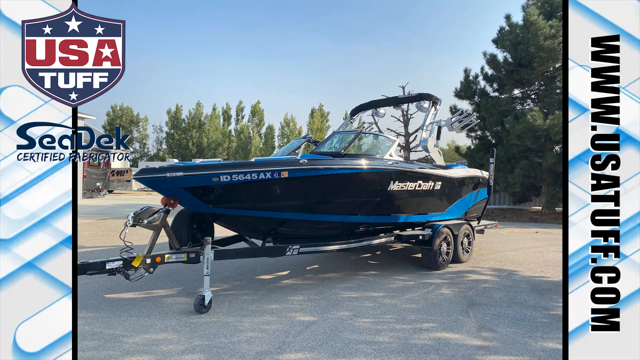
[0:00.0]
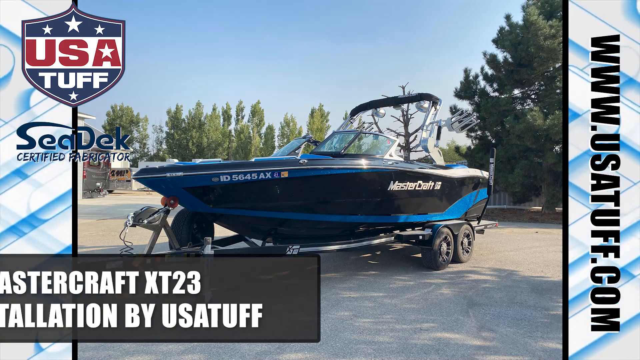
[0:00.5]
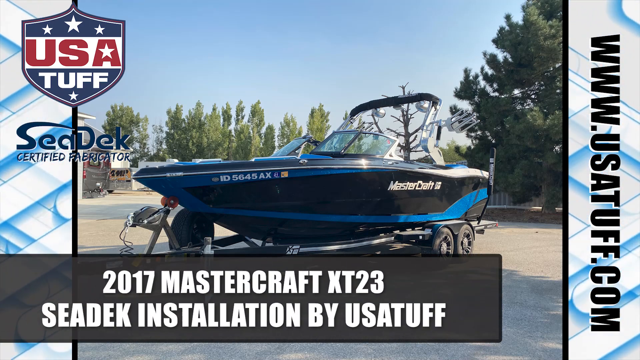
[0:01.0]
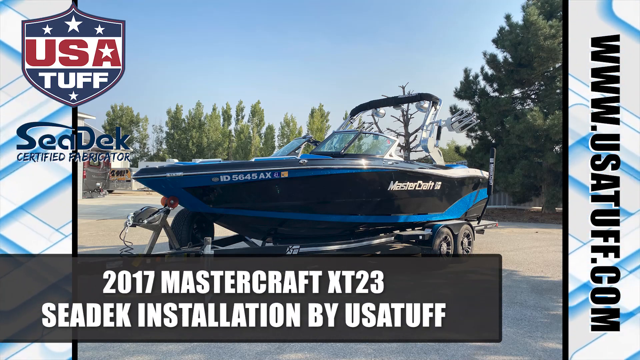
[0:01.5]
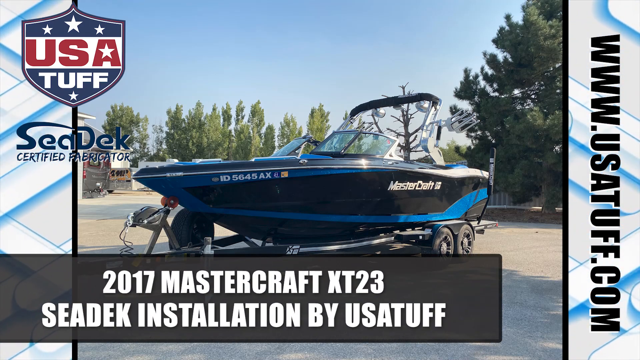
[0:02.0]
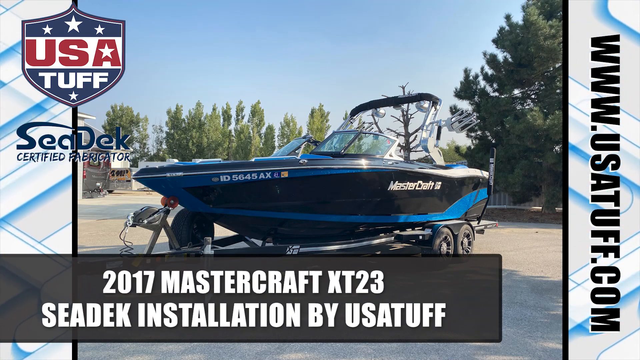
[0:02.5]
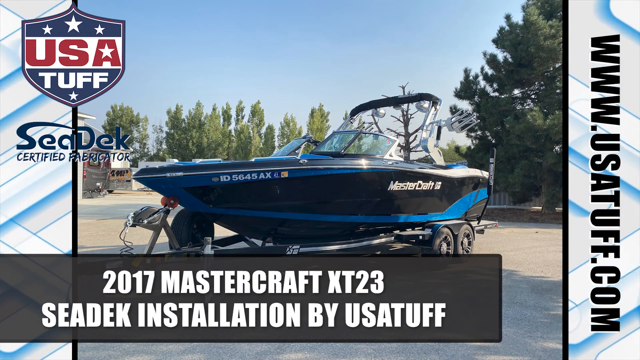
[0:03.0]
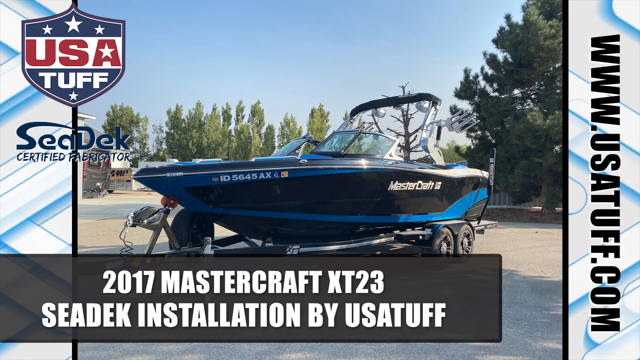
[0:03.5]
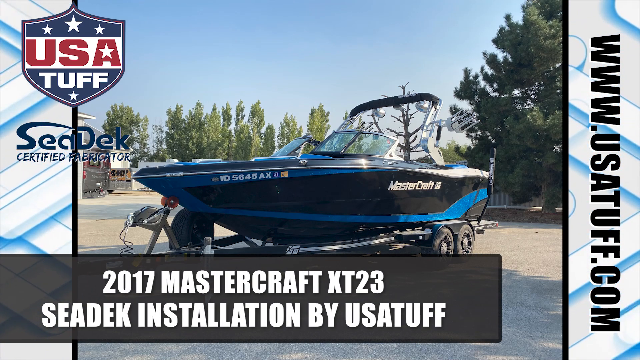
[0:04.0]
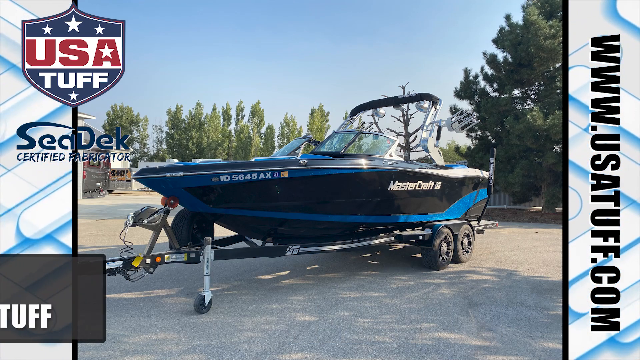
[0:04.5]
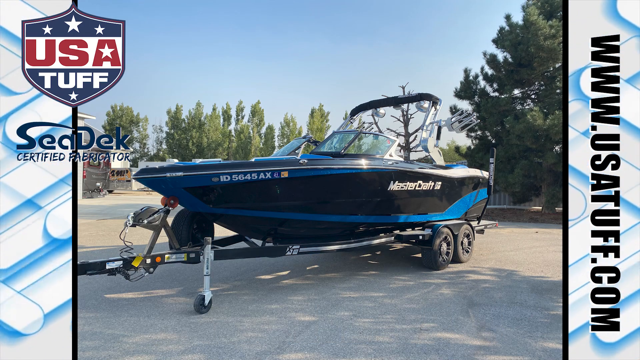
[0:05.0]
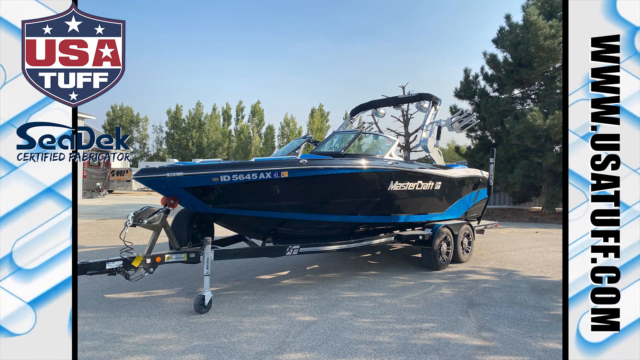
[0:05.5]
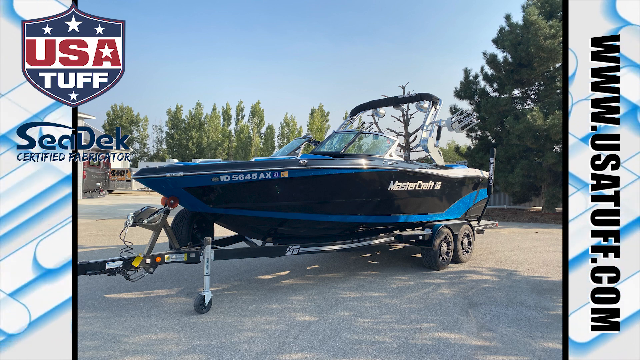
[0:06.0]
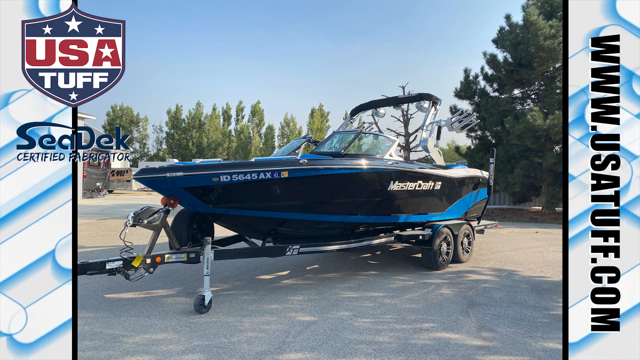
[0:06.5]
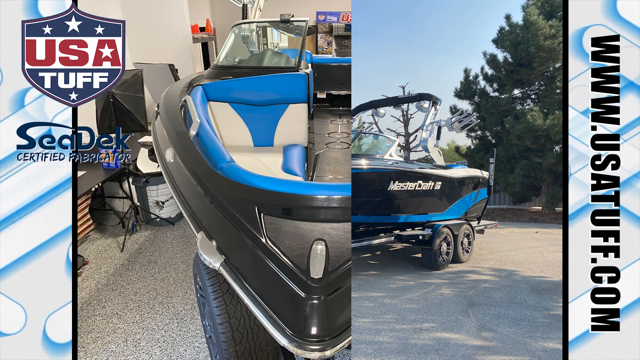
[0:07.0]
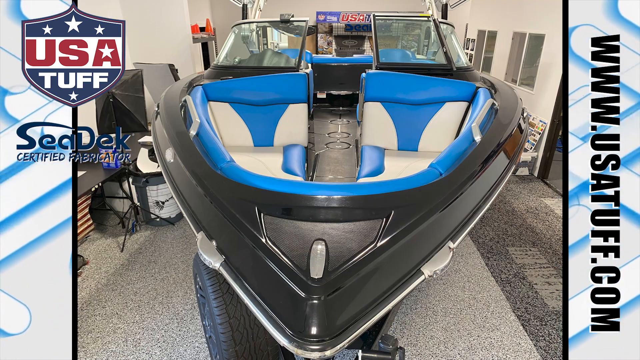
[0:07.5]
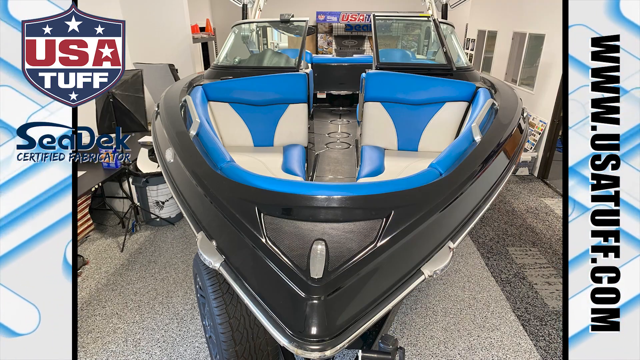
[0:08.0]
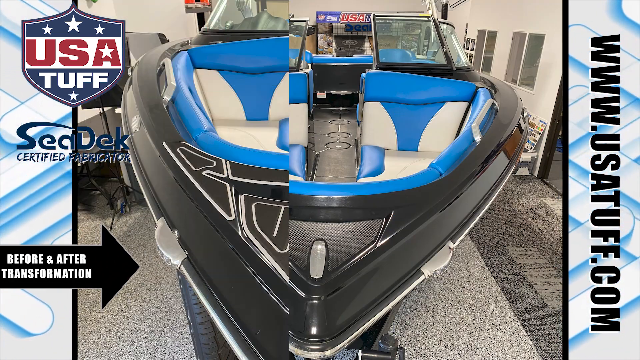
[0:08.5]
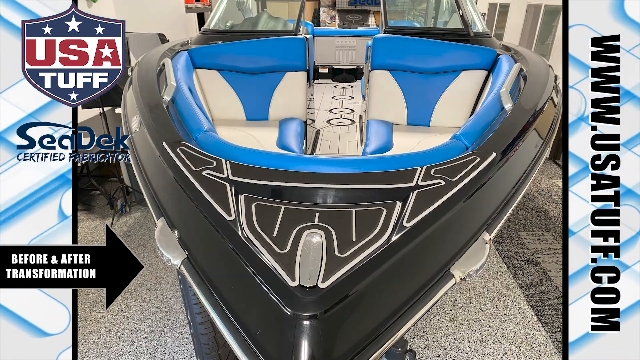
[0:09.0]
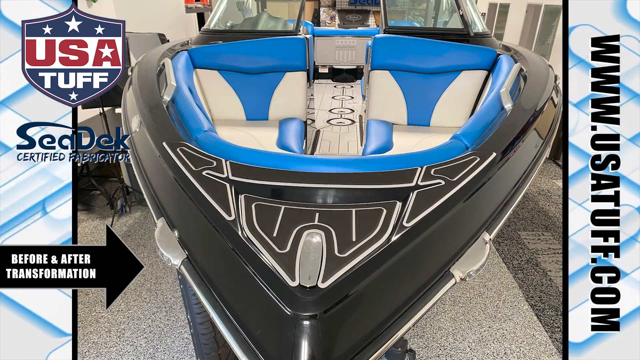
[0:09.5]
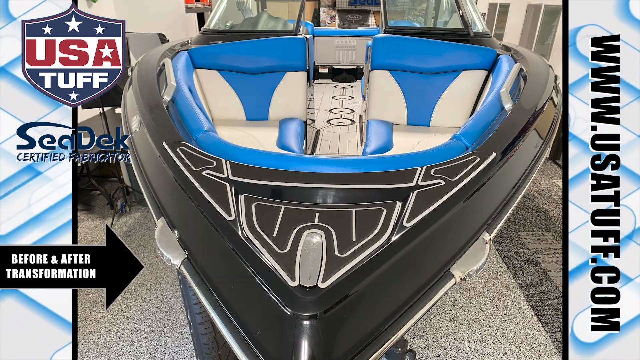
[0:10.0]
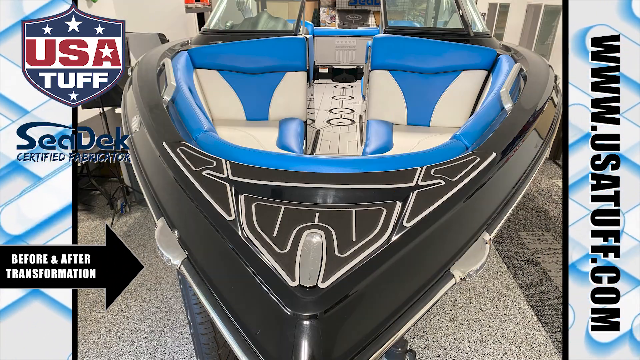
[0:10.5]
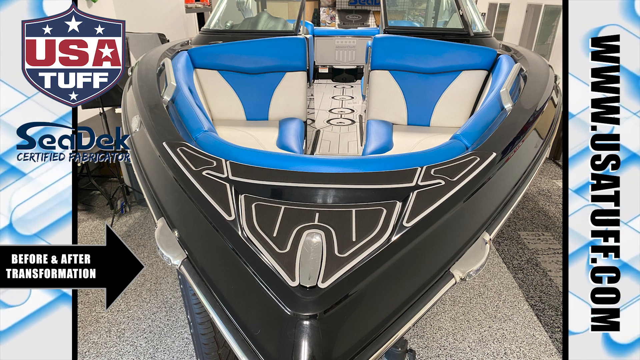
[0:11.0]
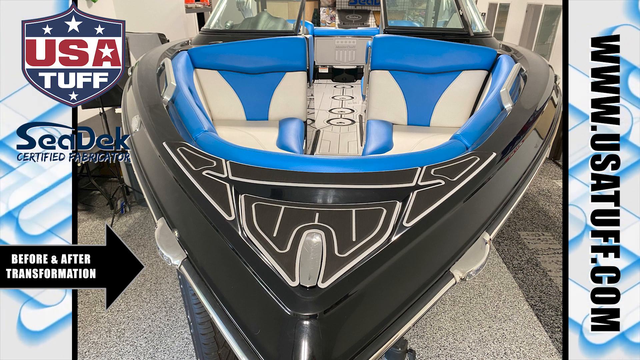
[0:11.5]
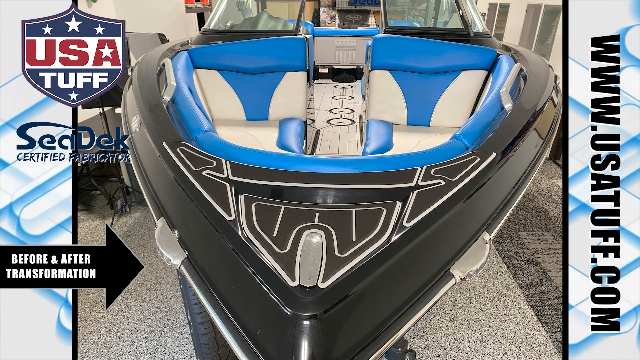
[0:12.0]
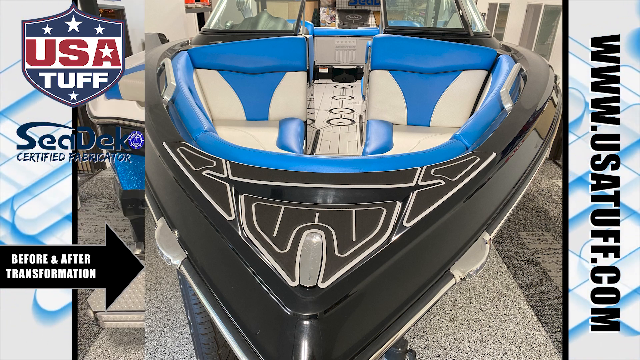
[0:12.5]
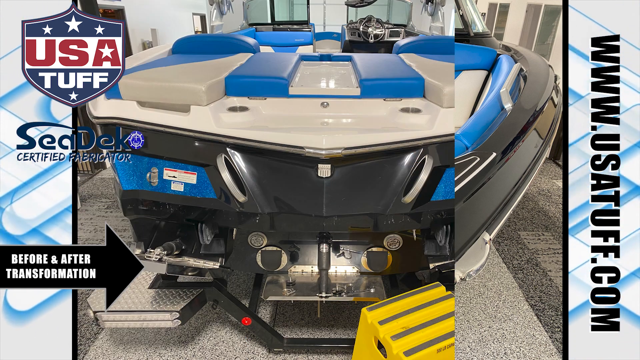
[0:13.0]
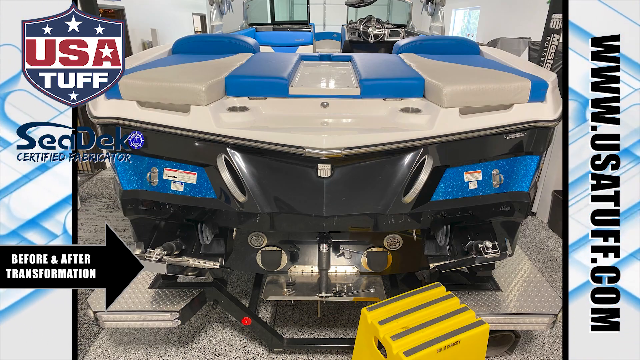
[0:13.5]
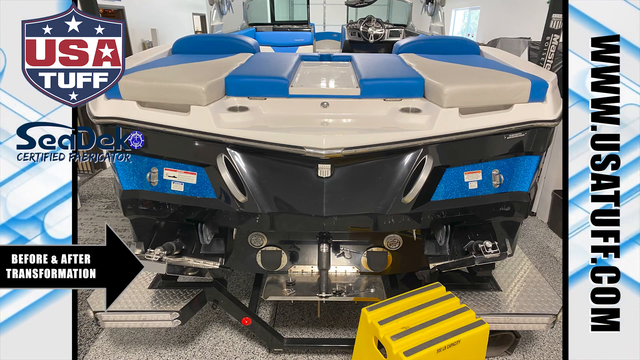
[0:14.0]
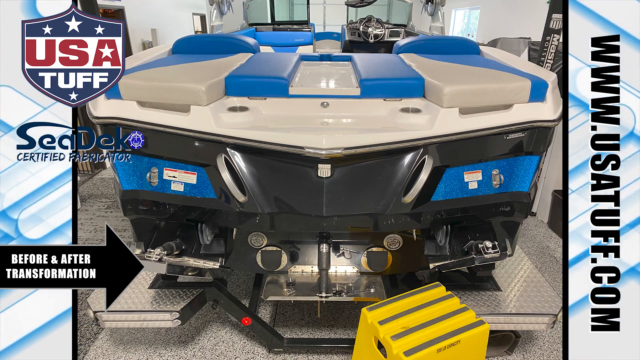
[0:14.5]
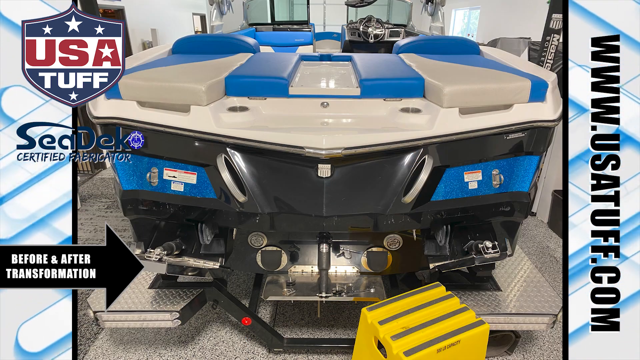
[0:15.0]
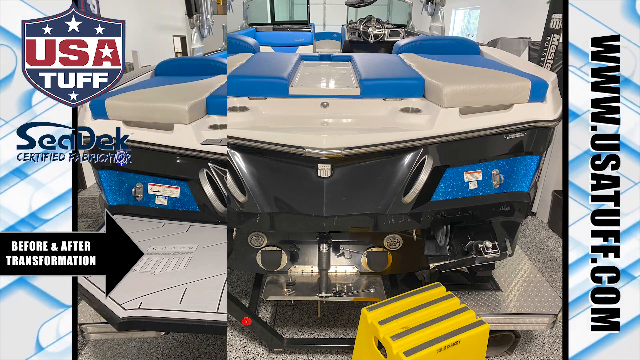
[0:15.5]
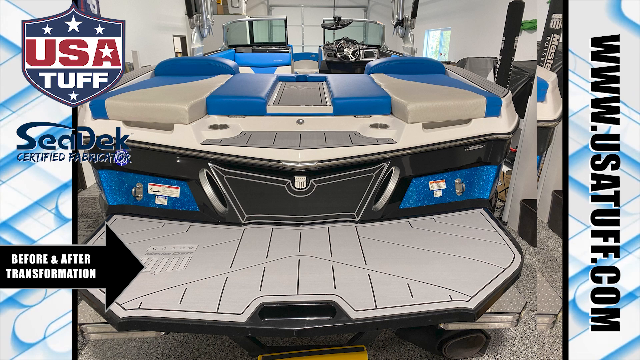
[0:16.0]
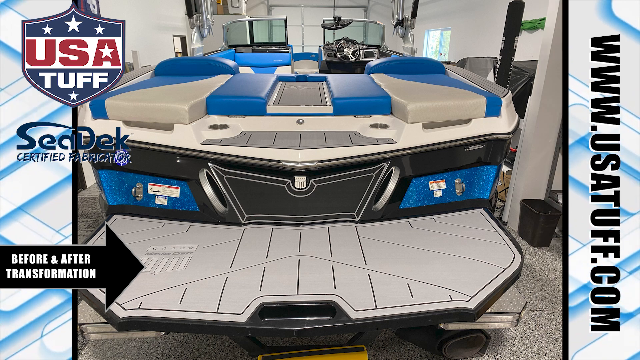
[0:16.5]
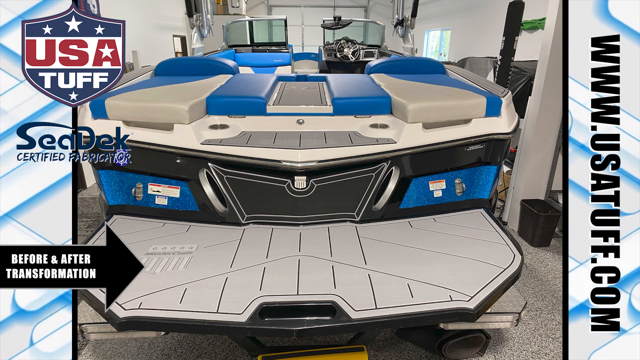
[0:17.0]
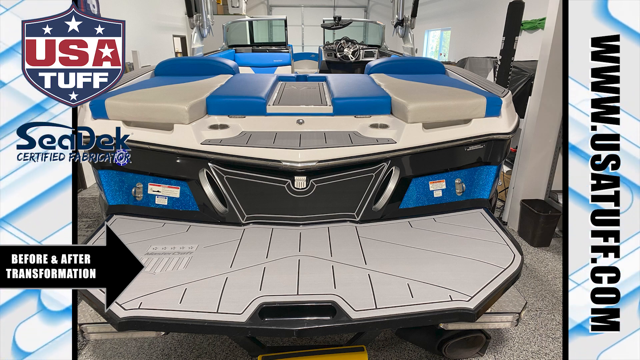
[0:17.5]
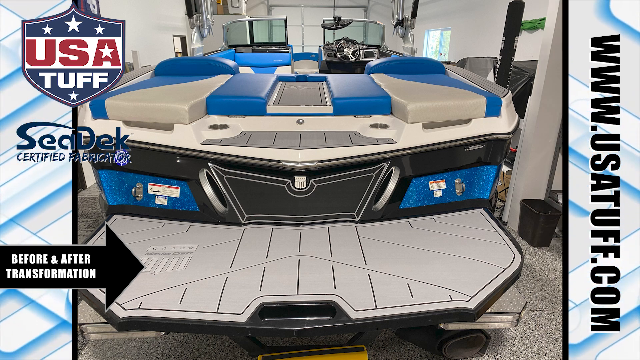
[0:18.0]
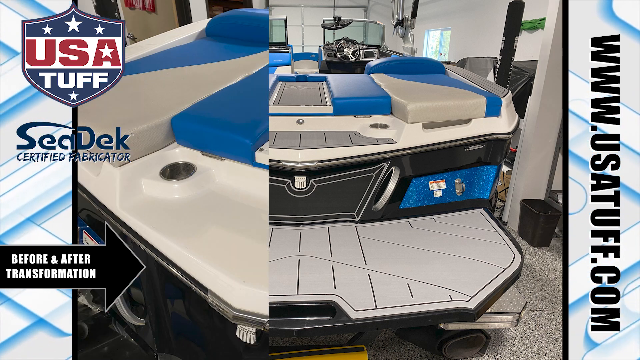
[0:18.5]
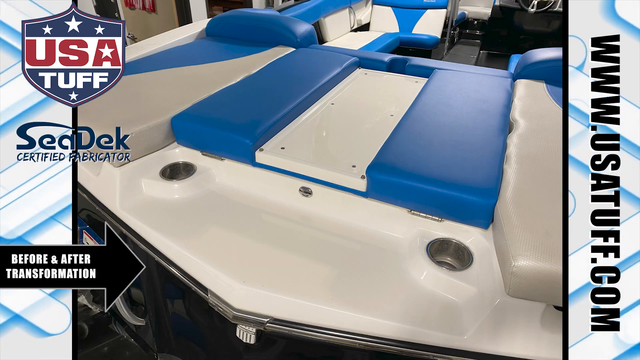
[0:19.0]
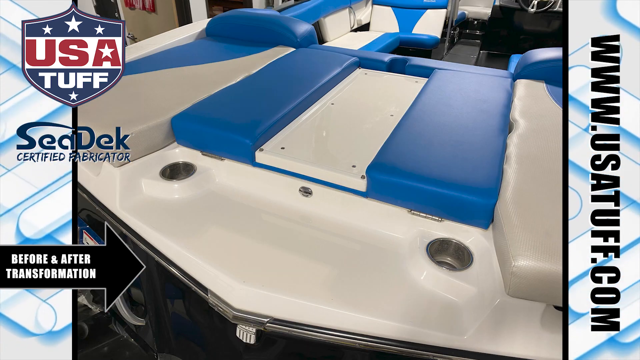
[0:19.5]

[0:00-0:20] On-screen text reads "USA Tuff", with Tuff spelled T-U-F-F, and underneath it what is possibly "C" then "DEK certified fabricator", though it is hard to tell. On the right side is "www.usatuff.com". A boat appears that looks like it says "Mastercraft" on it, and an ID reads "56458X". The boat is mostly black and blue and has "2017 Mastercraft XT 23" on it. The video then shows different parts of the boat, with the text "before and after transformation". The seats are mostly blue and white, and there is a section that can be walked through. The before and after views look the same at first glance.